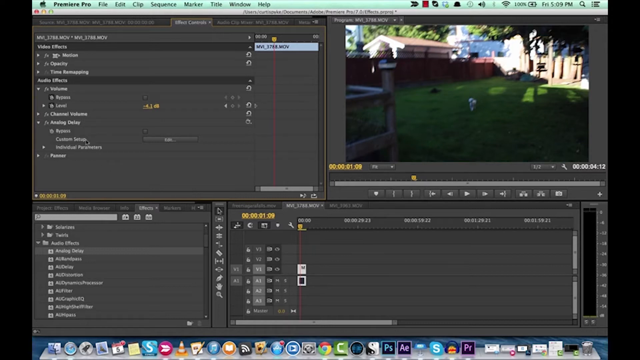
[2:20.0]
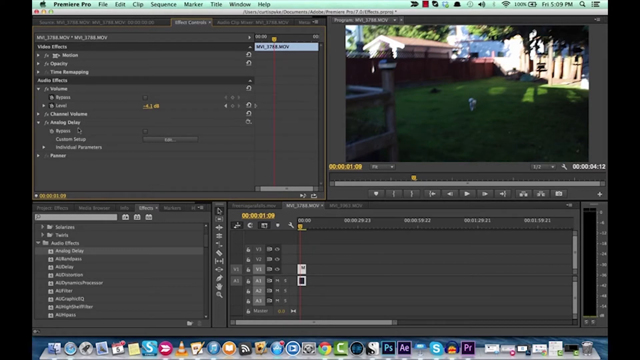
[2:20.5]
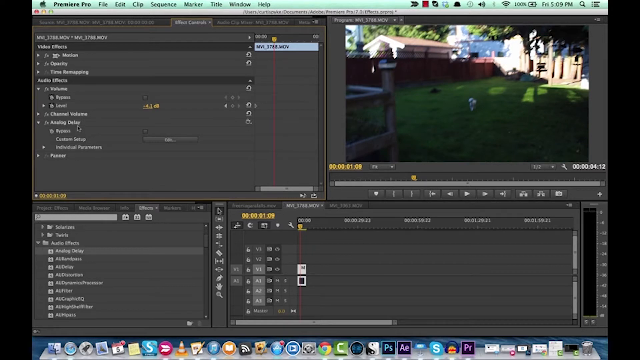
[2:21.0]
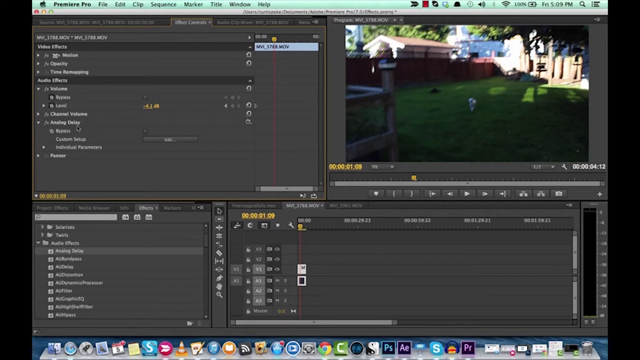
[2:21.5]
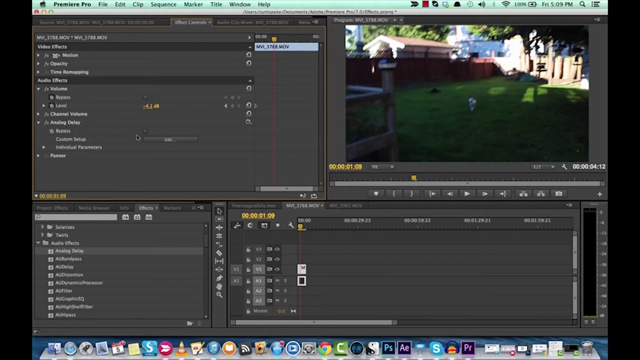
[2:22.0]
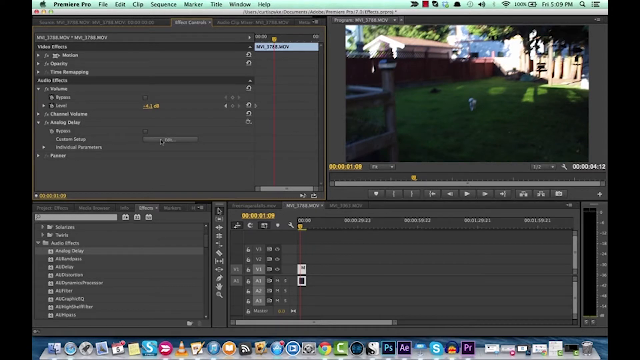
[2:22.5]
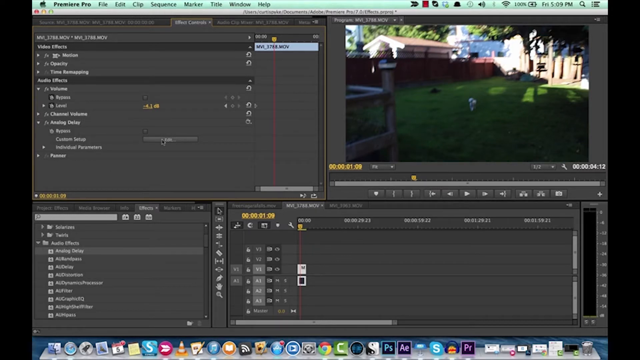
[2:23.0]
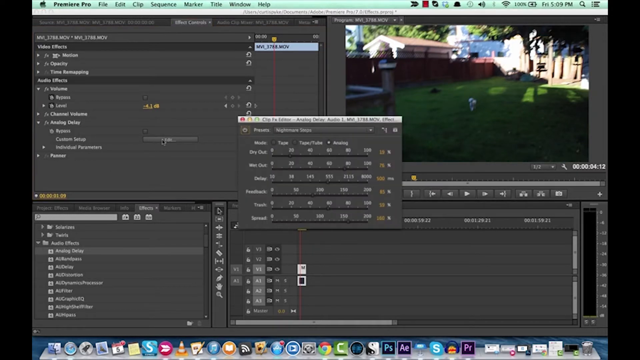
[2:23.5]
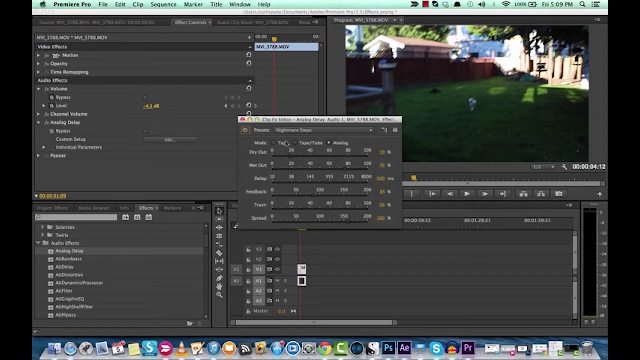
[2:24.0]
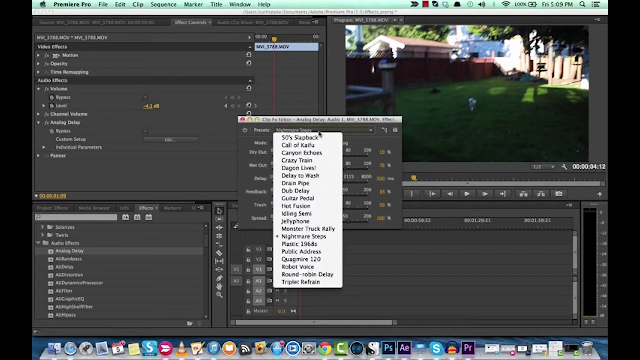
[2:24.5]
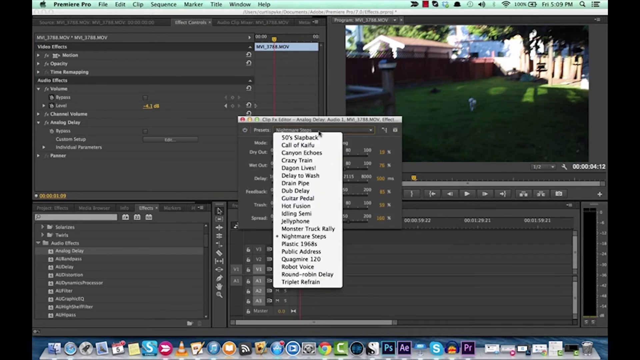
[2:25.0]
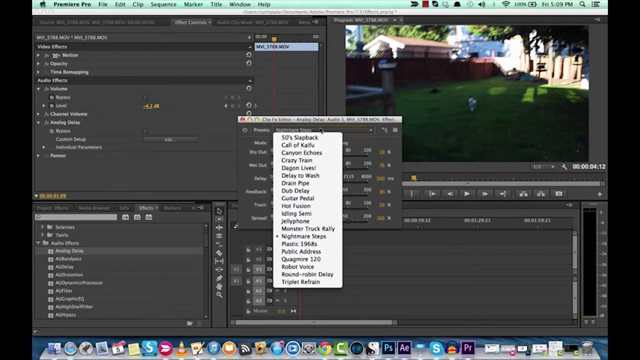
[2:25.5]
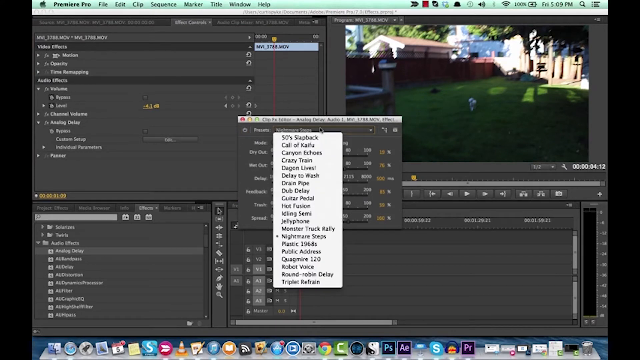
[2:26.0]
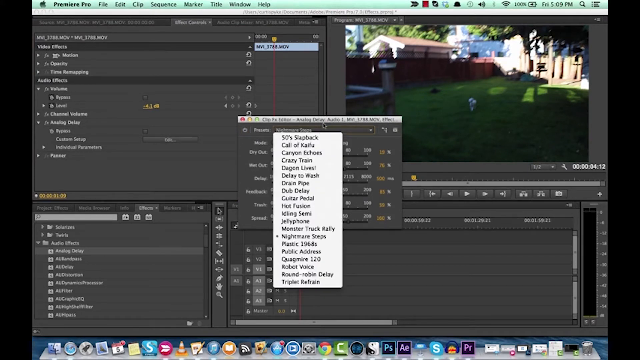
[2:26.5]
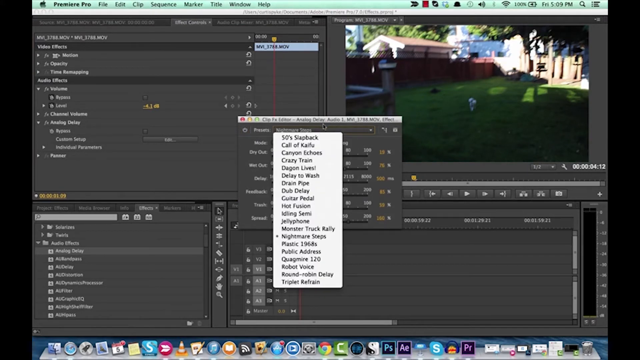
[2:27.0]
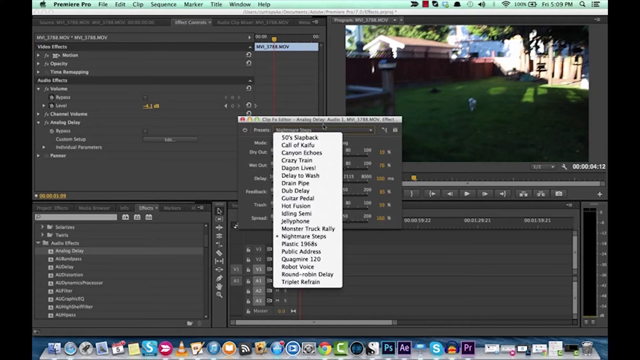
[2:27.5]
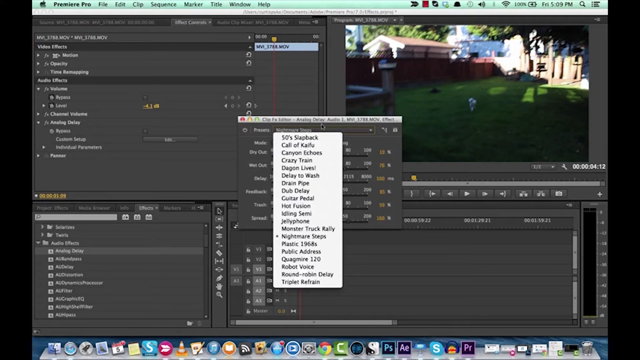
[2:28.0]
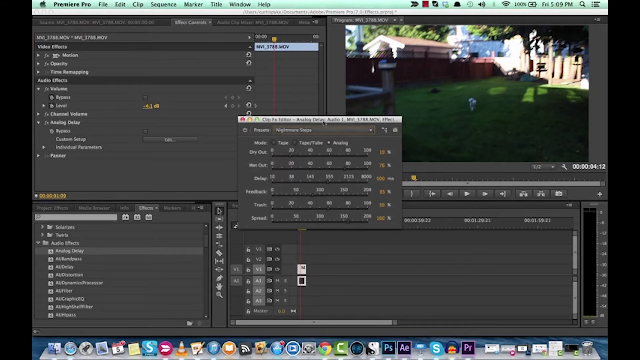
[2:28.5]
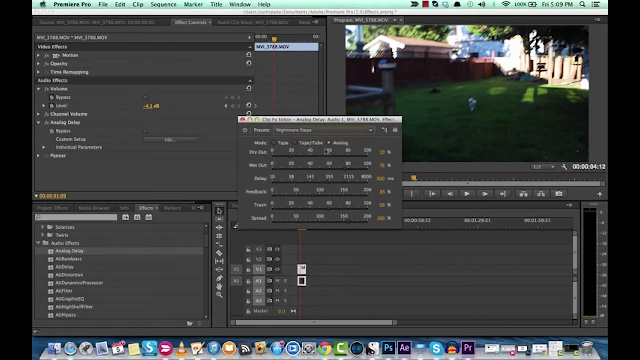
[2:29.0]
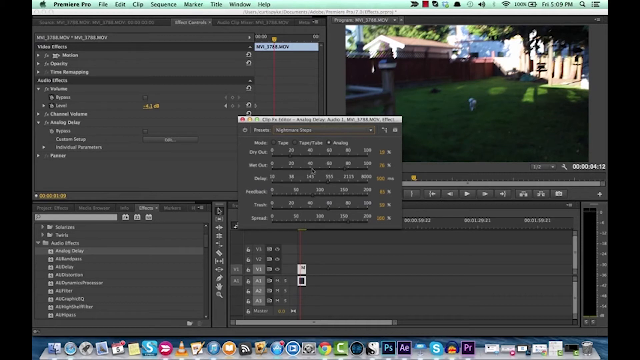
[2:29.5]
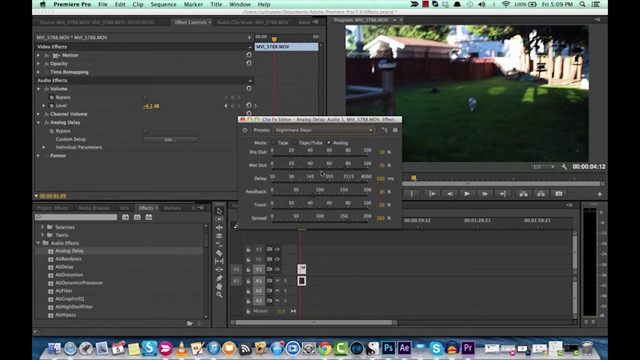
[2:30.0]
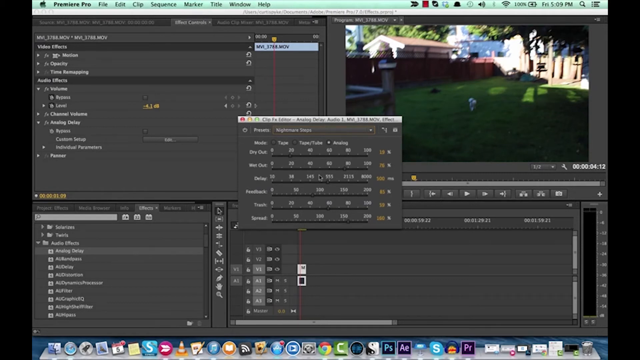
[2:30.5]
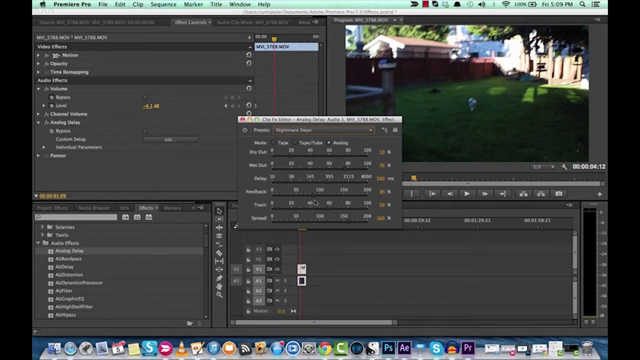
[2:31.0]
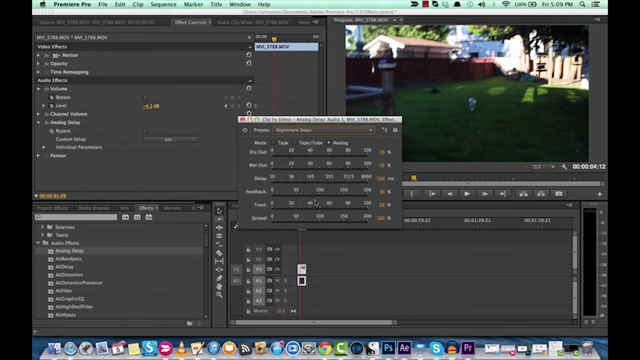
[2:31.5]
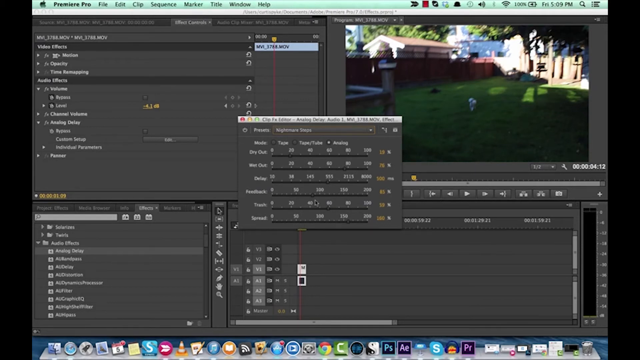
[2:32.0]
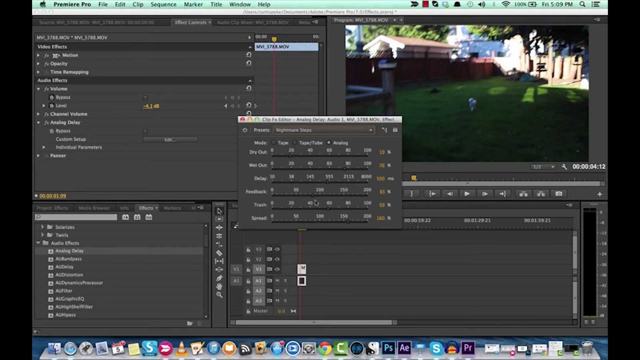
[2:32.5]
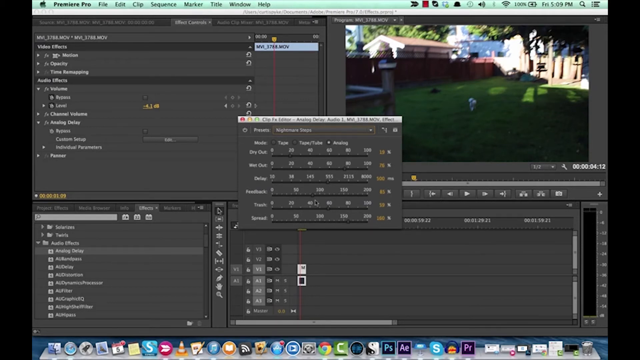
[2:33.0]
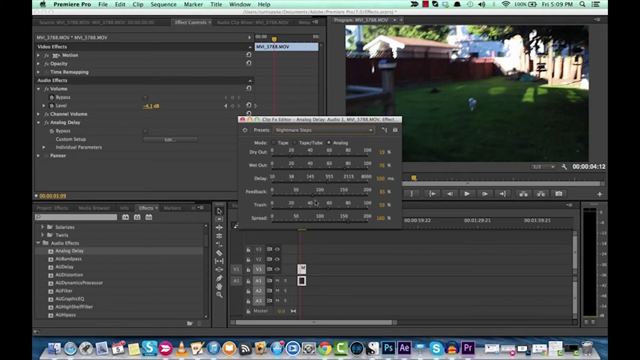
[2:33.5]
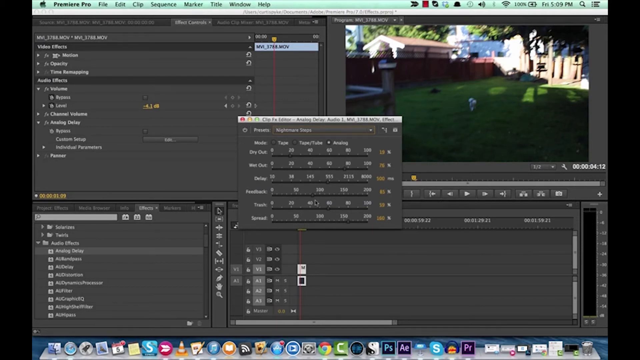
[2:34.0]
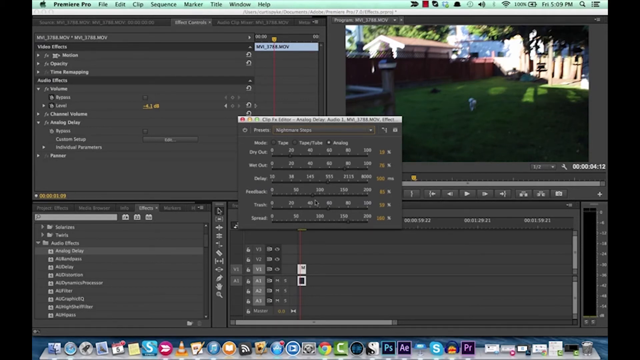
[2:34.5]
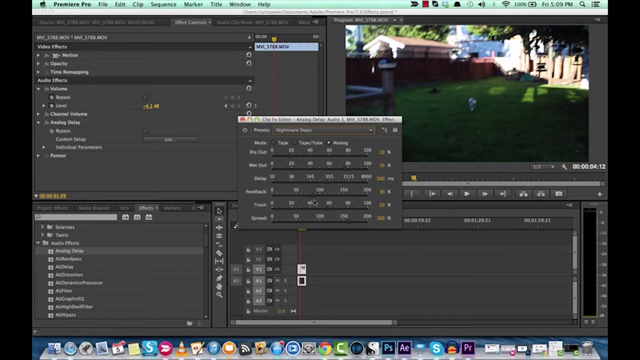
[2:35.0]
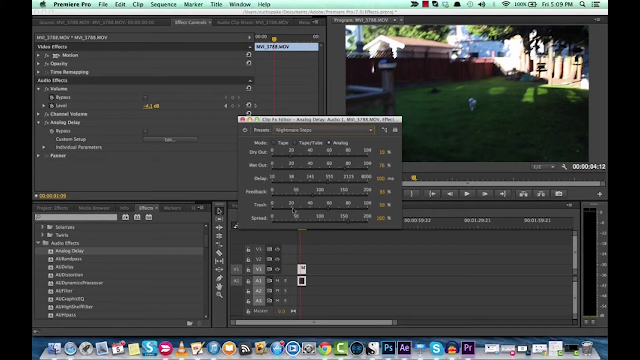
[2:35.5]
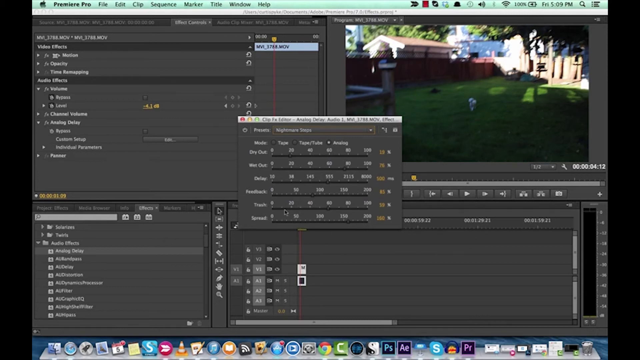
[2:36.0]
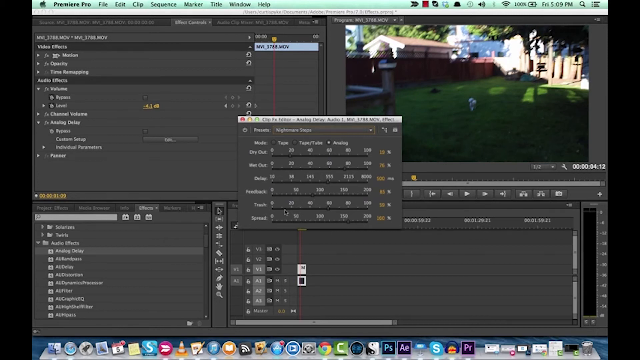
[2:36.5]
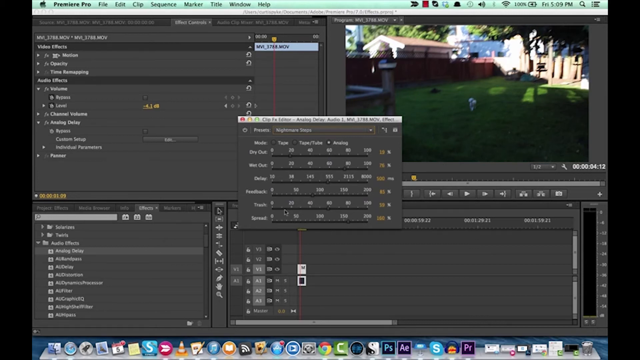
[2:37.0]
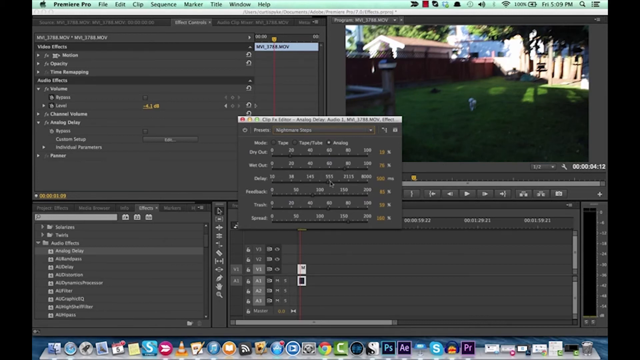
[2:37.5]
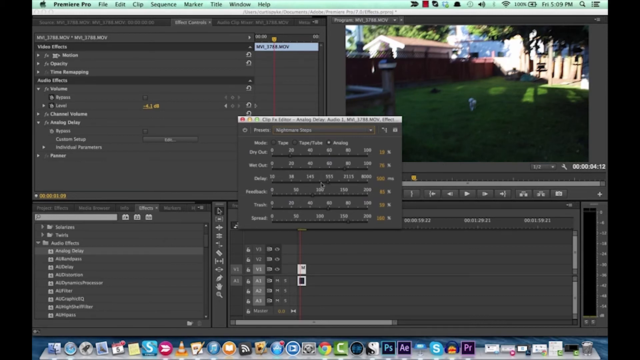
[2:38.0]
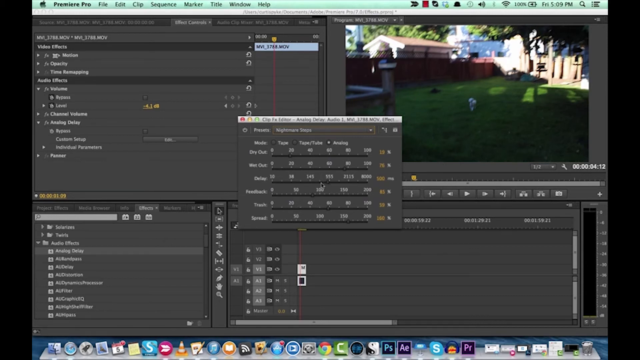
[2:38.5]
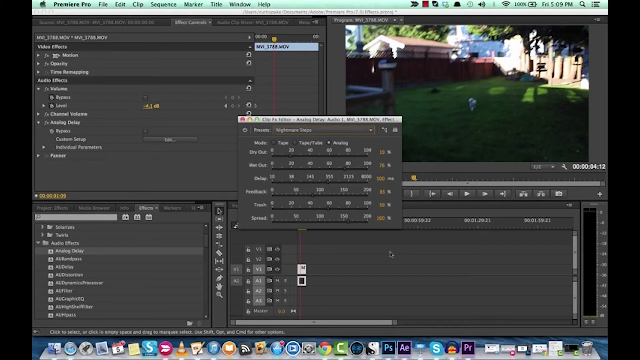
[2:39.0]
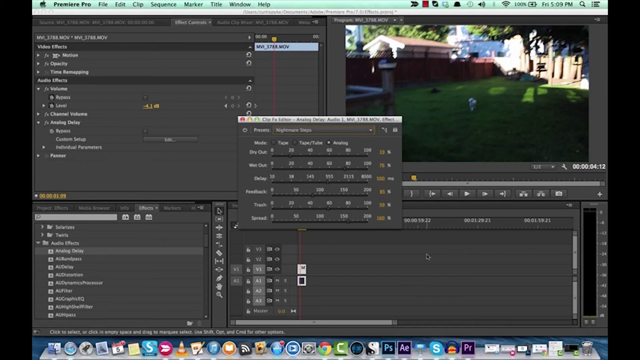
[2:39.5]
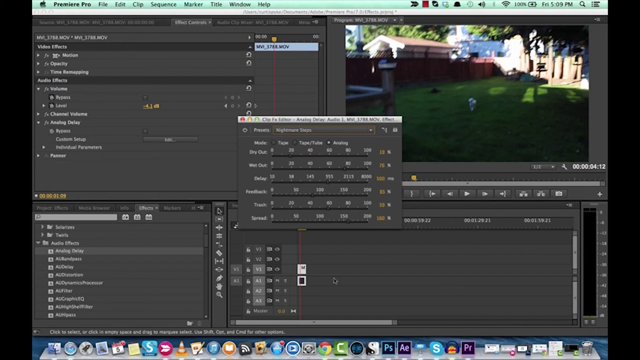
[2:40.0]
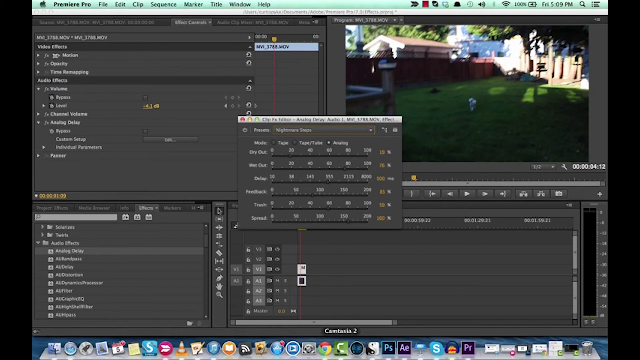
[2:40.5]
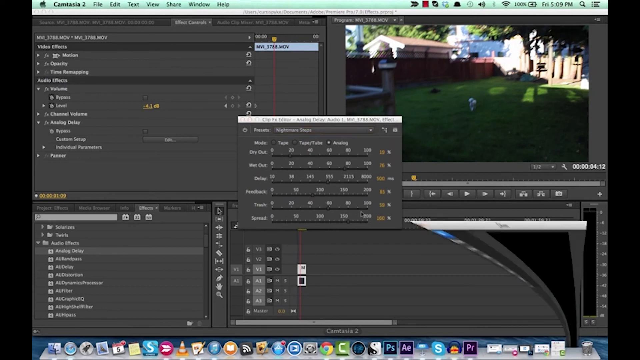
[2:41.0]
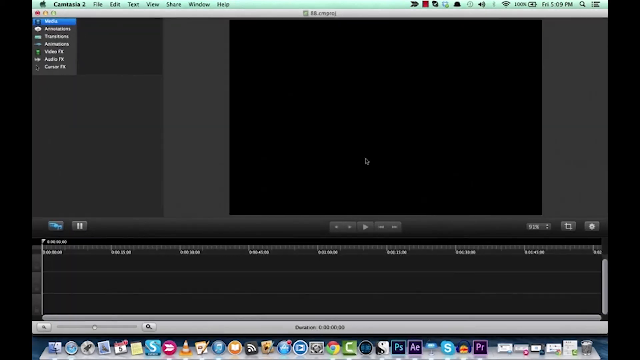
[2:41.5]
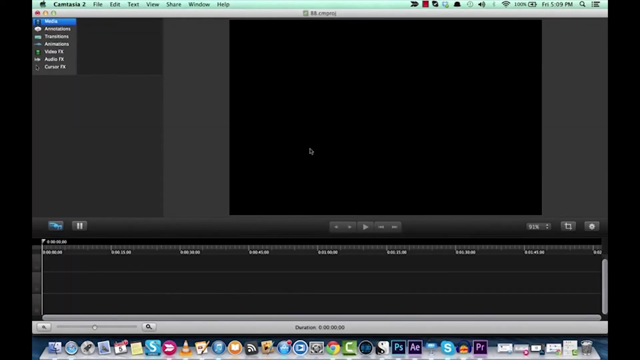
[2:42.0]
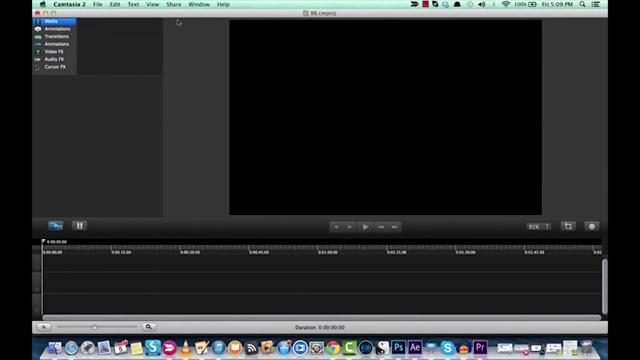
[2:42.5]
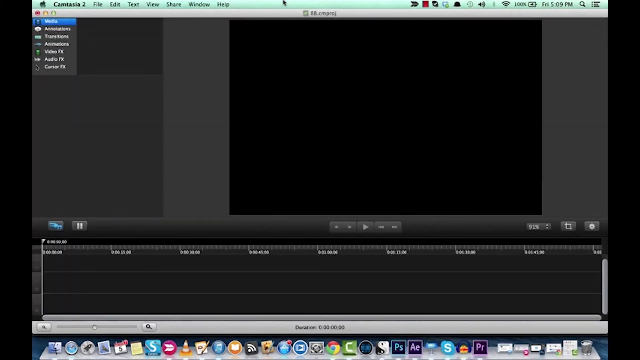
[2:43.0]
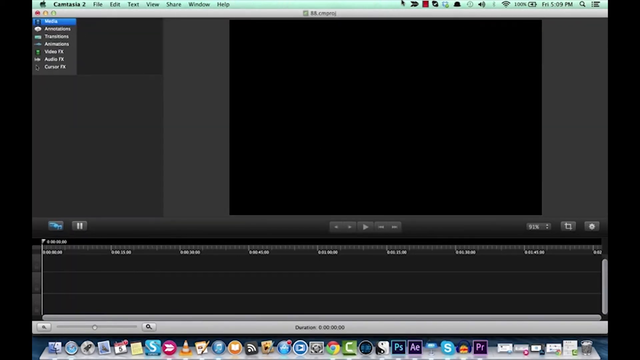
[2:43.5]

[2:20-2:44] The user goes back to the Edit button under Audio Effects on the top left-hand side of the screen and opens the audio effects. Starting from the Nightmare Snaps preset, they go through the various settings. By default there is a section labeled "Mode", set to Analog mode. They hover over options such as Feedback and Delay and wait for a while, only moving the mouse. They then go to the command bar or home menu and open another program called Camtasia, and the mouse moves, apparently to the left.